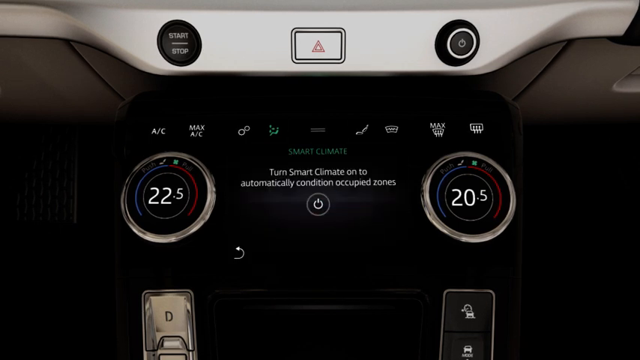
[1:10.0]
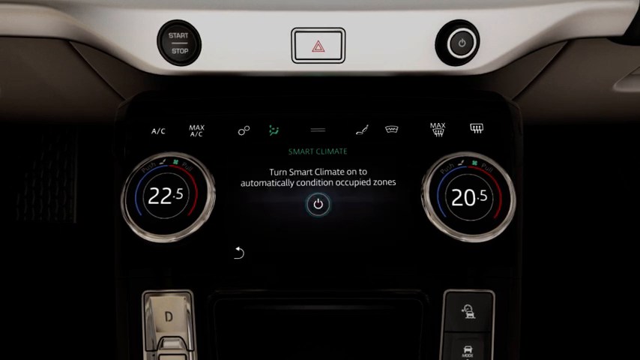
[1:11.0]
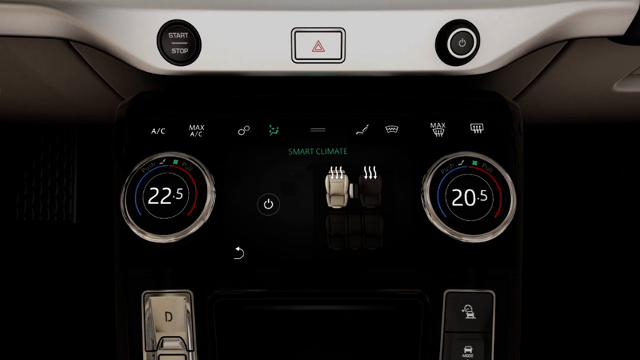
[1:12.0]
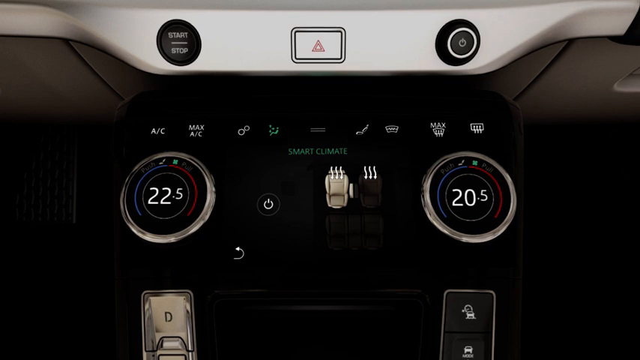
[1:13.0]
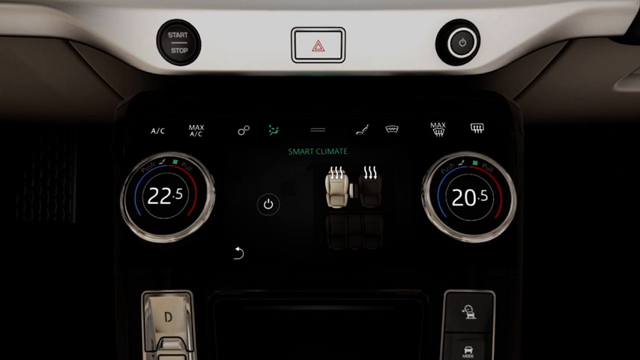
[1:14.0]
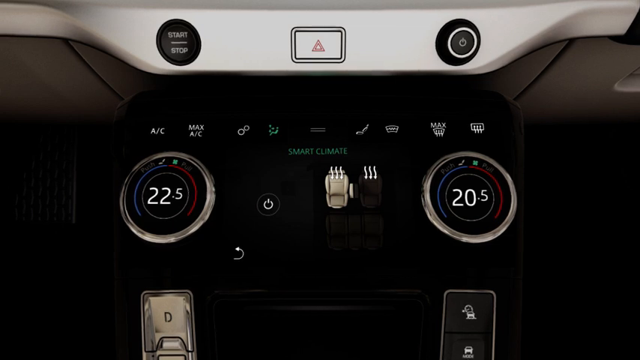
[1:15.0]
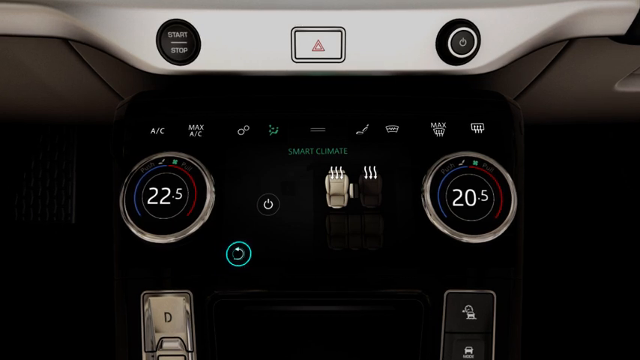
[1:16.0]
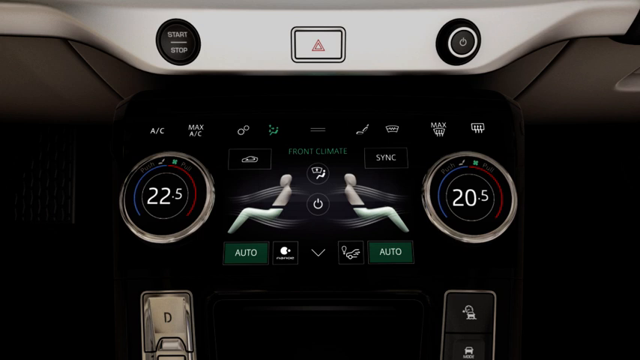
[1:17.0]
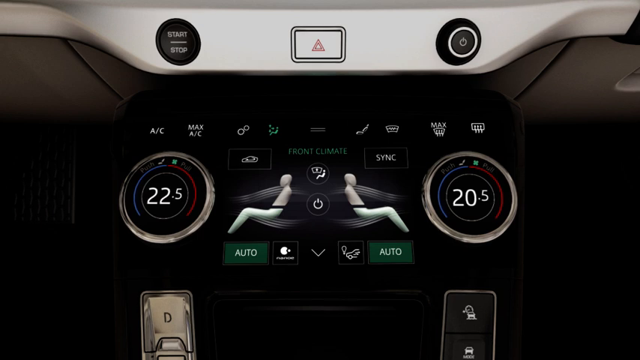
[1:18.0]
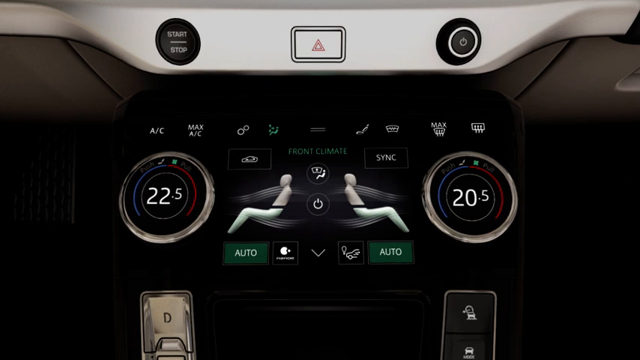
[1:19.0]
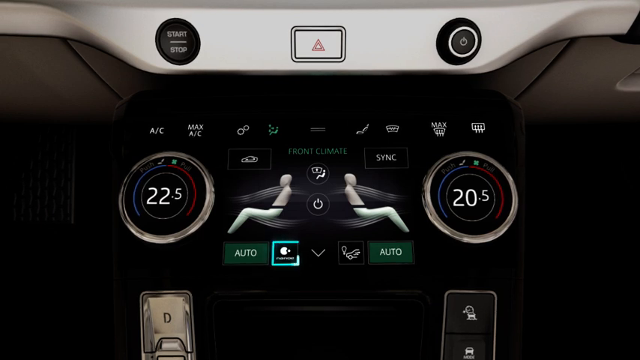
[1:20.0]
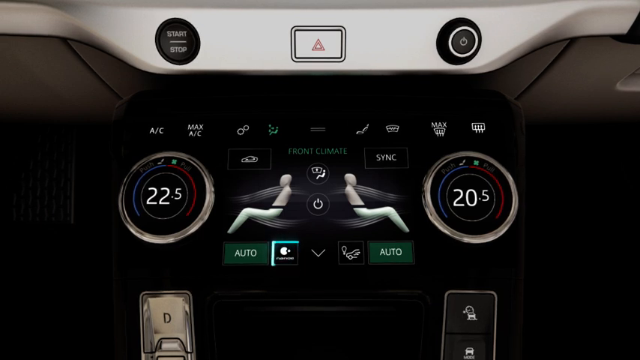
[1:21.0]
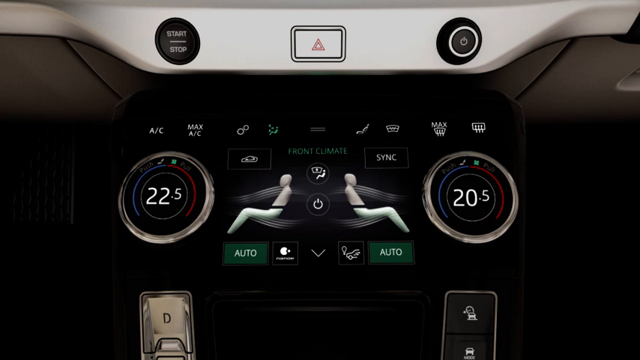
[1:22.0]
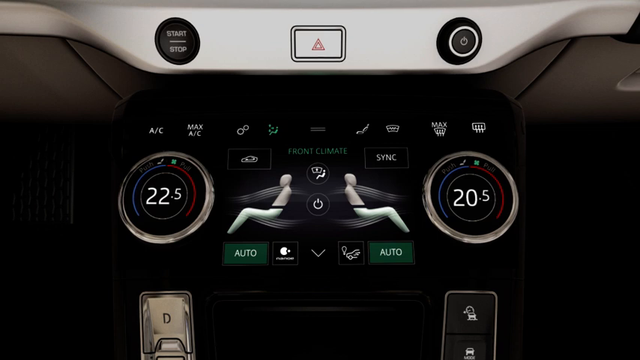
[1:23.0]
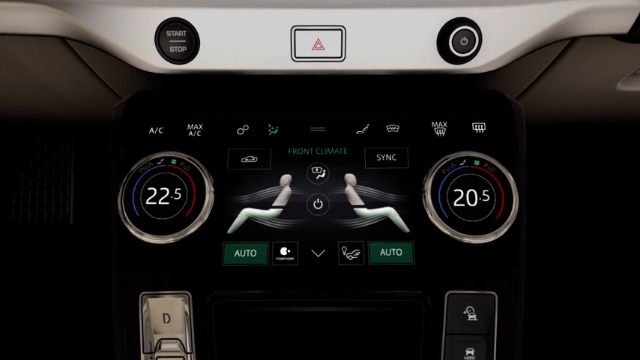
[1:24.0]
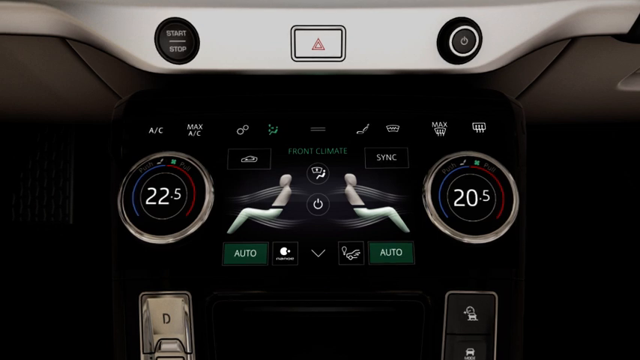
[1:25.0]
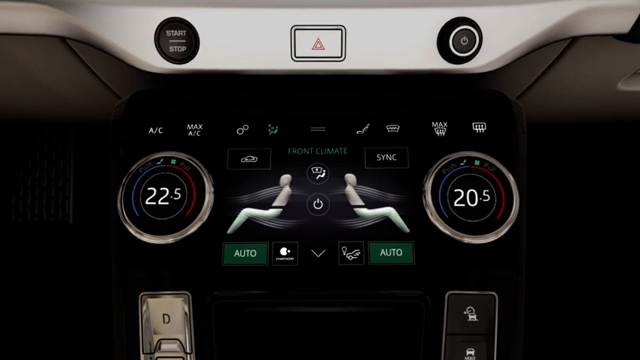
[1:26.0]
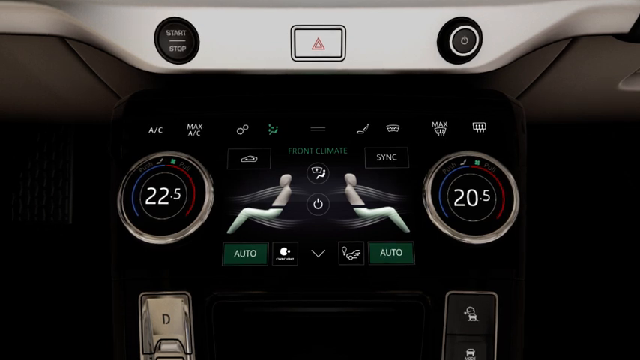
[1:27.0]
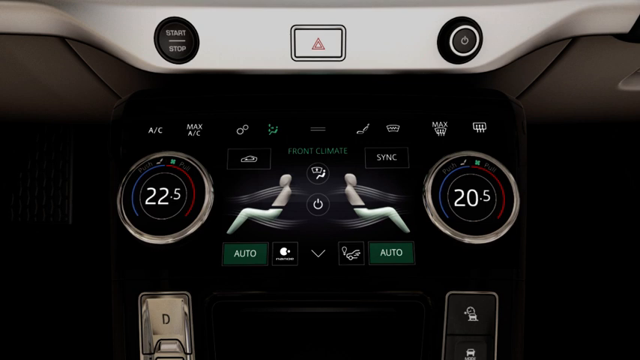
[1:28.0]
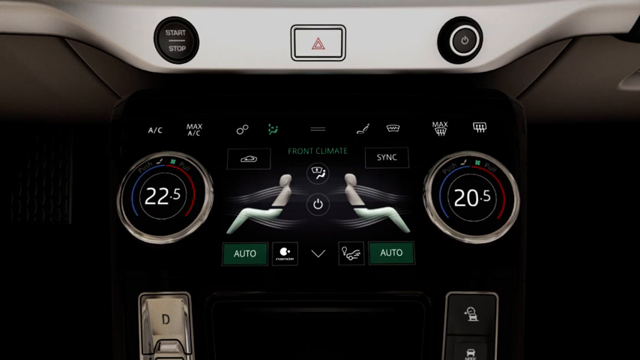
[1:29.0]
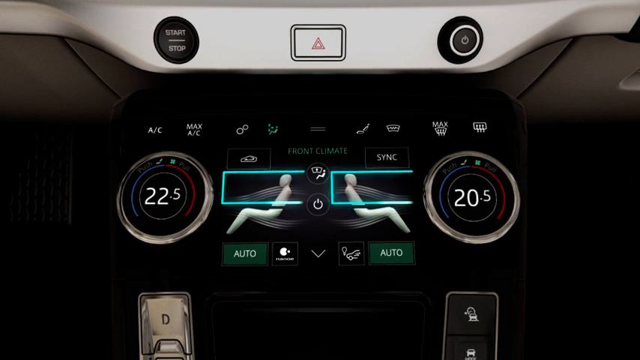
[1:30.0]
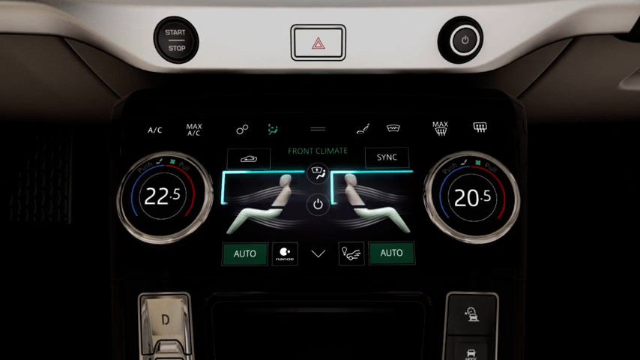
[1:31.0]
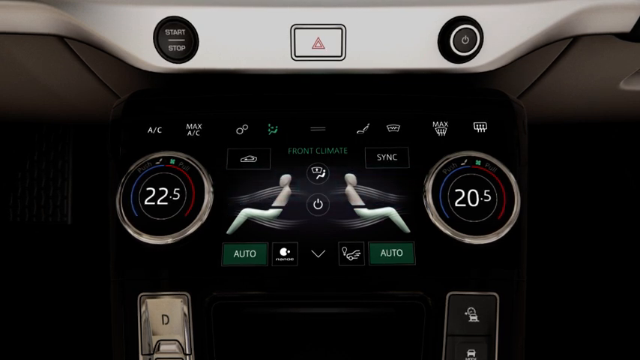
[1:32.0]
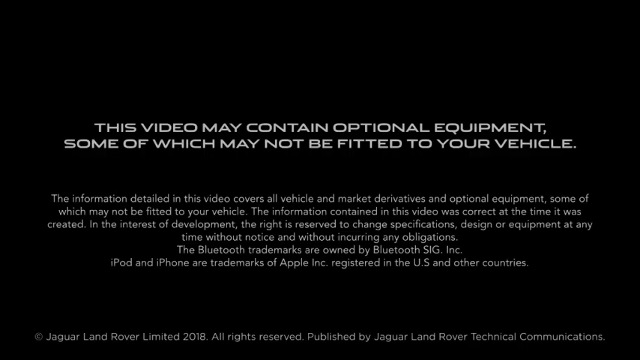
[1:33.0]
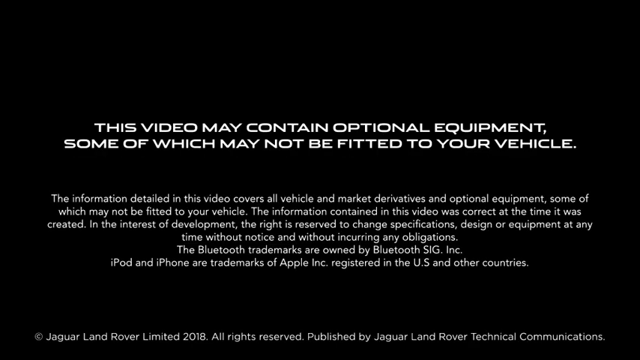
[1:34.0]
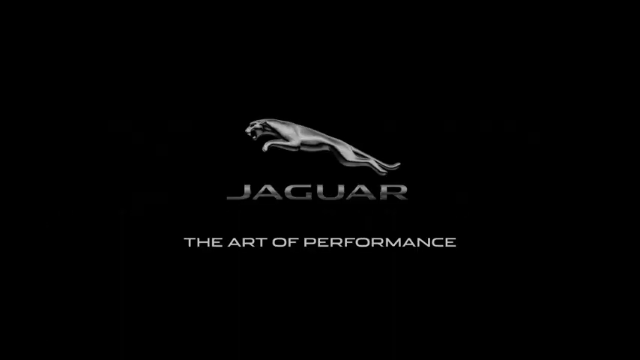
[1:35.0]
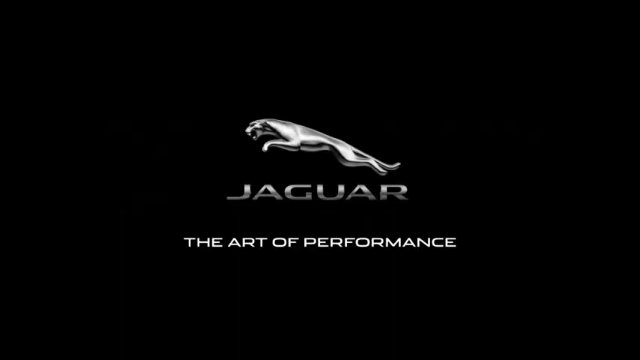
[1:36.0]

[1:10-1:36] The image in the same unit changes: the seats are replaced, the power button is still in the center of the square, and below "smart climate" along the top, white text reads "Turn smart climate on" and, on a new line, "automatically condition occupied zones". The power button flashes and the screen returns to the previous view with the seats. A circular green notification flashes around the return button, and the previous screen is back. A pale blue line then outlines the button next to the left-hand "auto" button, but nothing happens. Next, a horizontal rectangular, pale blue, luminous button covers the top half of each passenger symbol. That disappears, and a black screen with information appears, reading "This video may contain optional equipment, some of which may not be fitted to your vehicle" along with further information, and at the bottom "Jaguar Land Rover Limited 2018, all rights reserved".